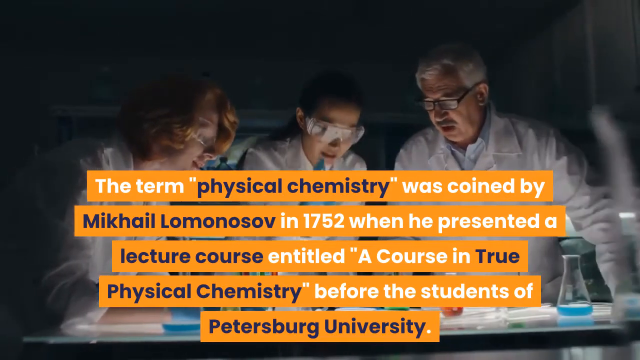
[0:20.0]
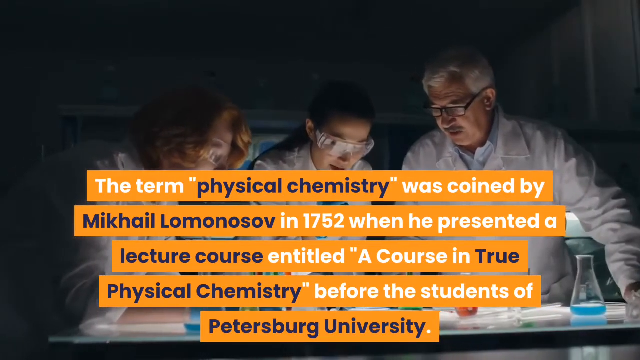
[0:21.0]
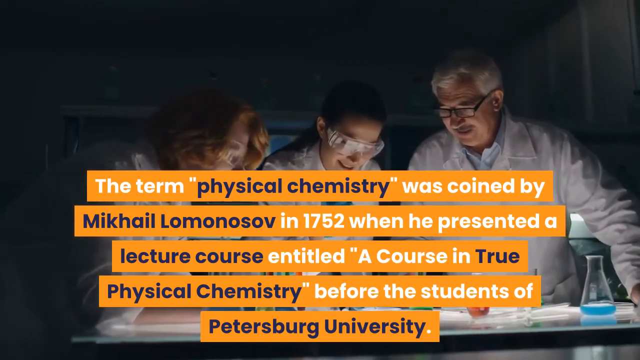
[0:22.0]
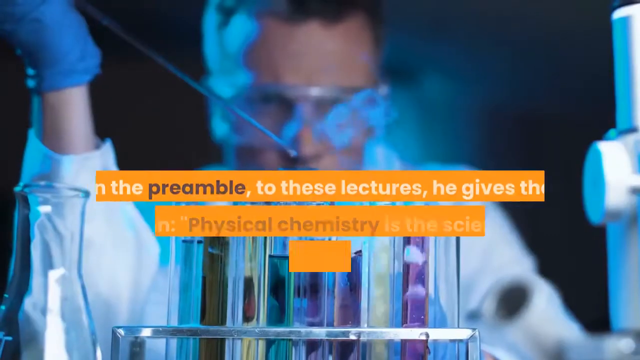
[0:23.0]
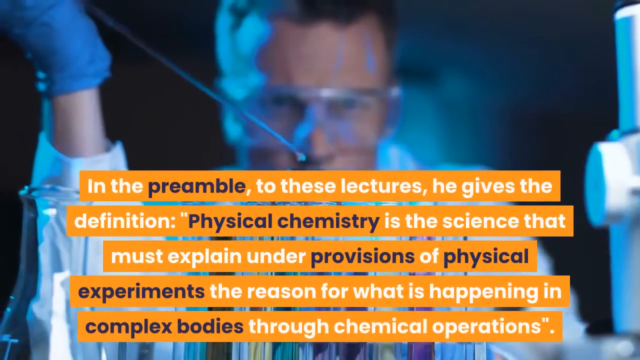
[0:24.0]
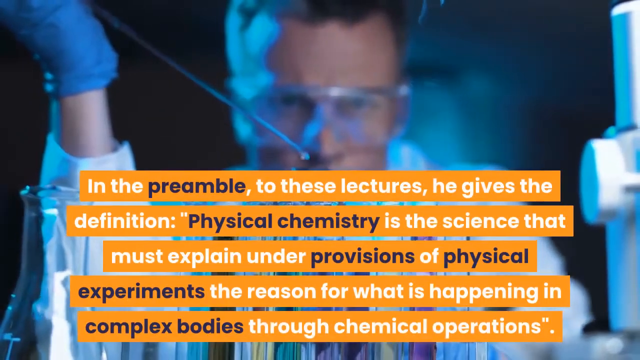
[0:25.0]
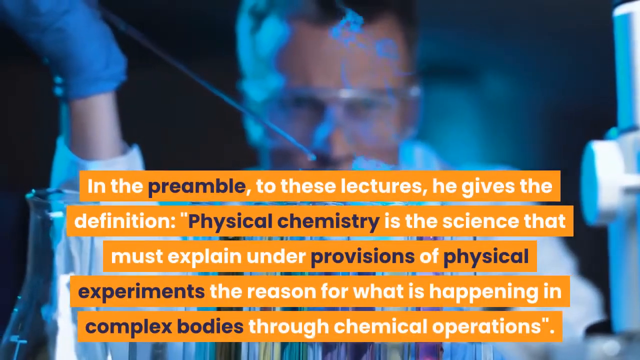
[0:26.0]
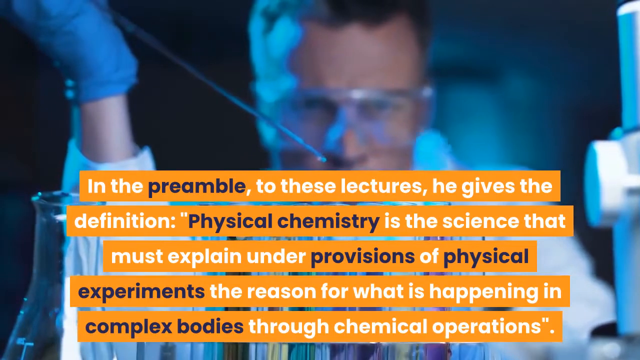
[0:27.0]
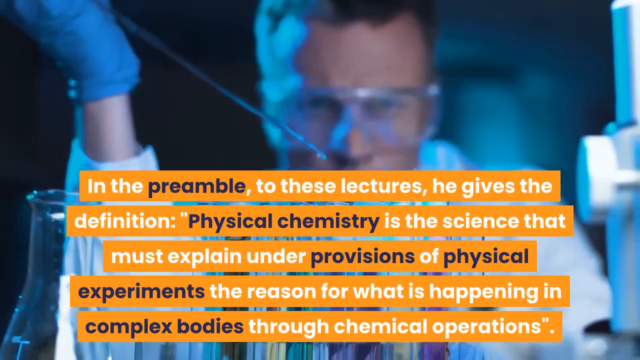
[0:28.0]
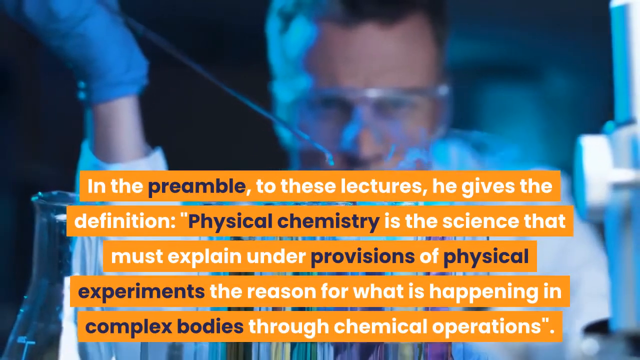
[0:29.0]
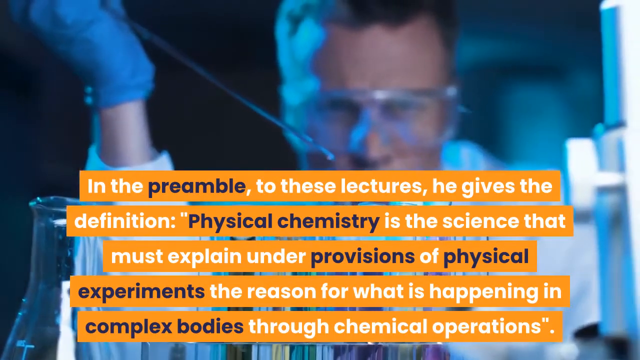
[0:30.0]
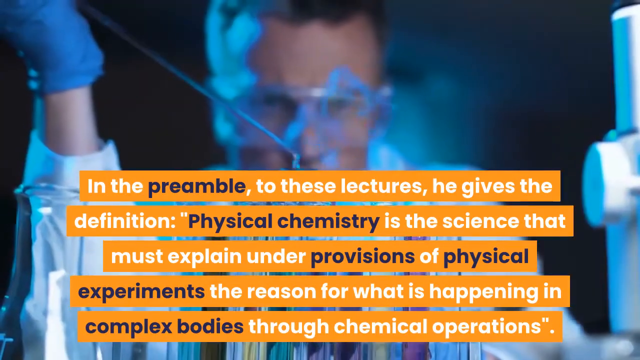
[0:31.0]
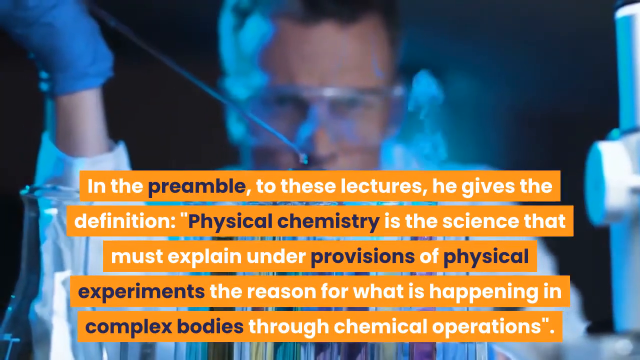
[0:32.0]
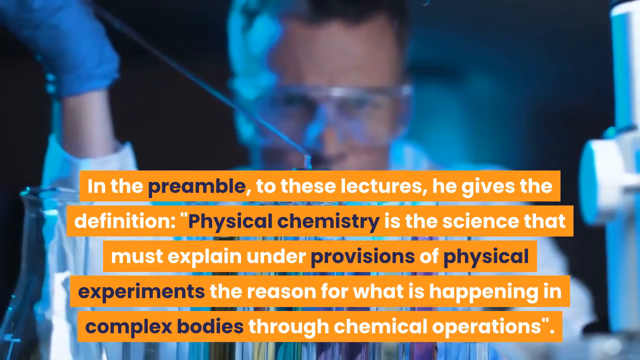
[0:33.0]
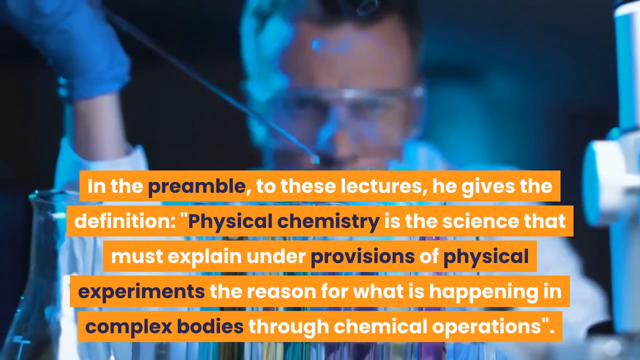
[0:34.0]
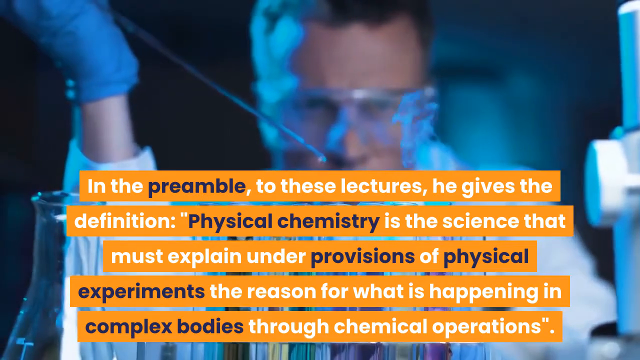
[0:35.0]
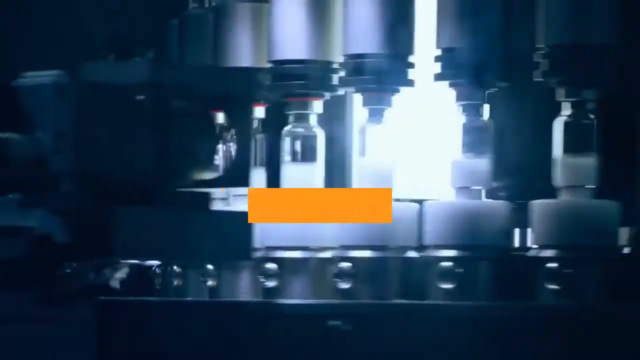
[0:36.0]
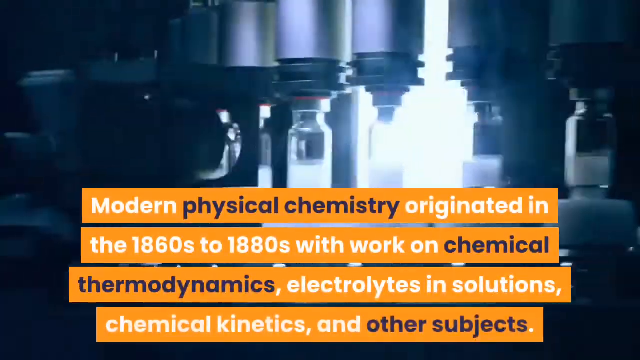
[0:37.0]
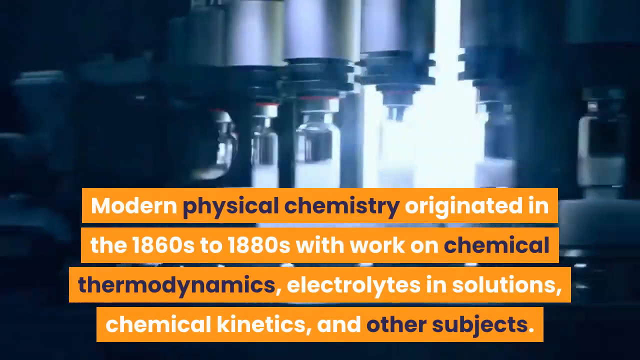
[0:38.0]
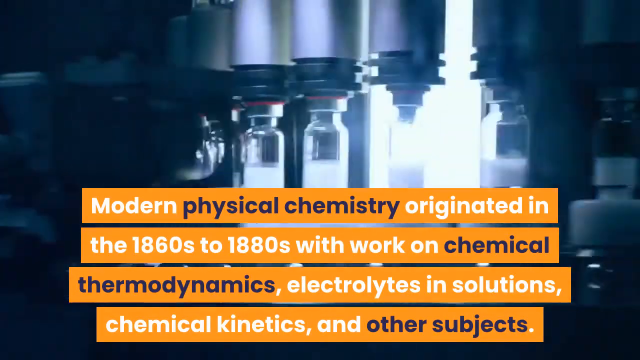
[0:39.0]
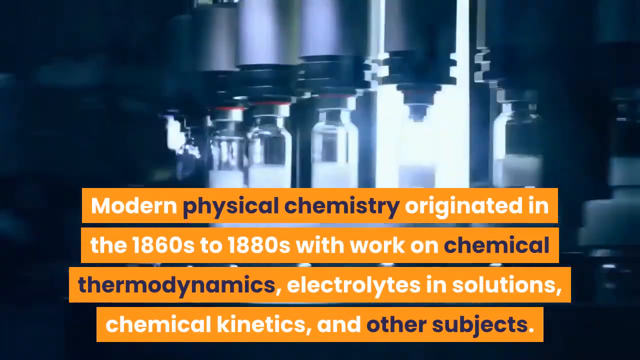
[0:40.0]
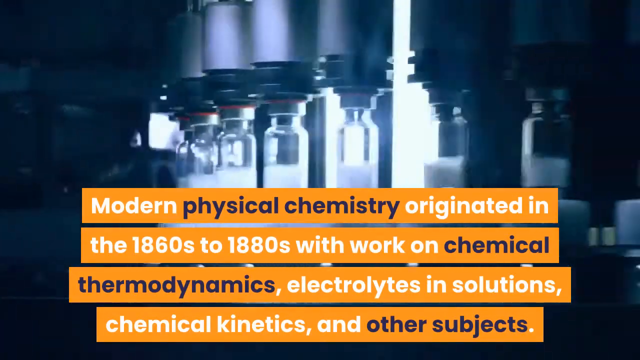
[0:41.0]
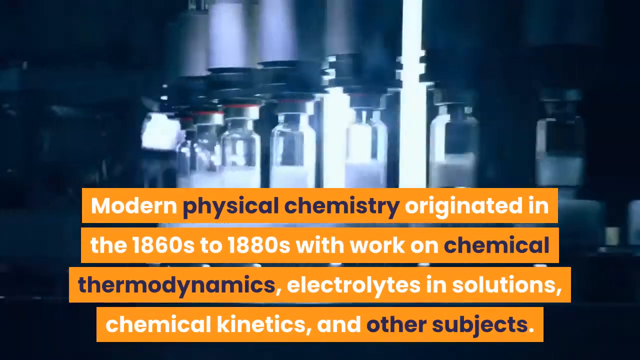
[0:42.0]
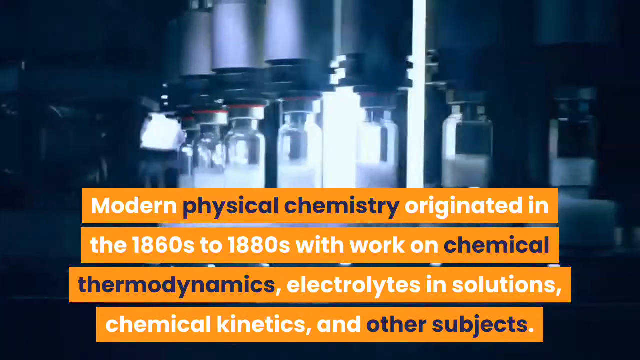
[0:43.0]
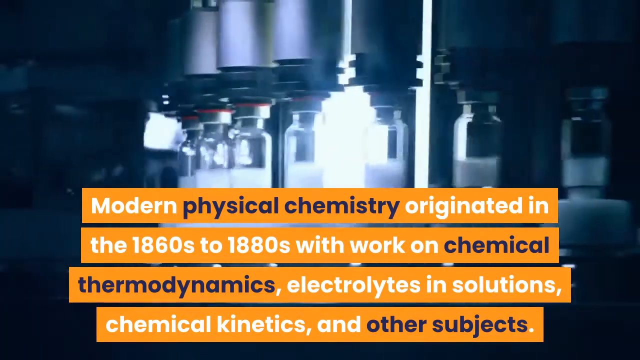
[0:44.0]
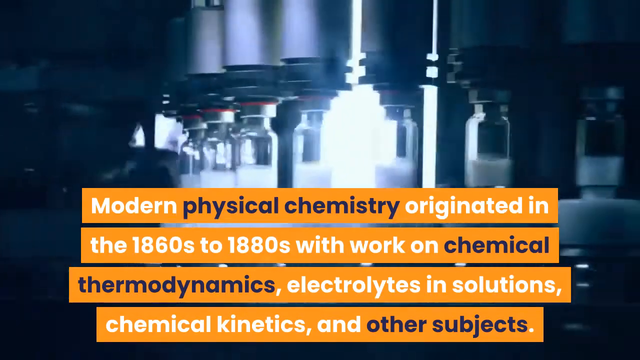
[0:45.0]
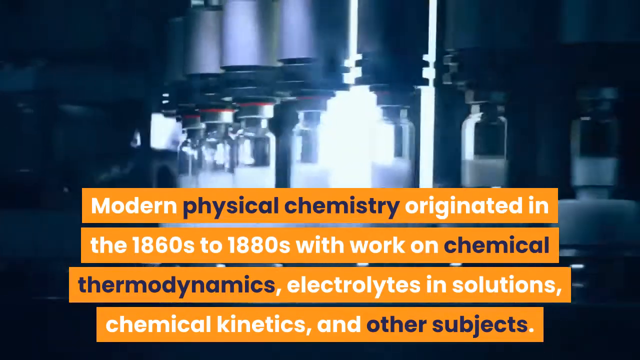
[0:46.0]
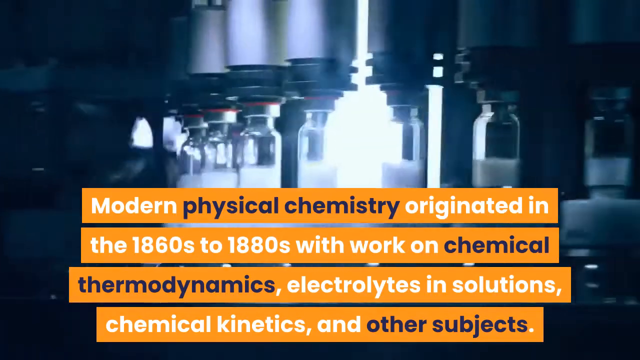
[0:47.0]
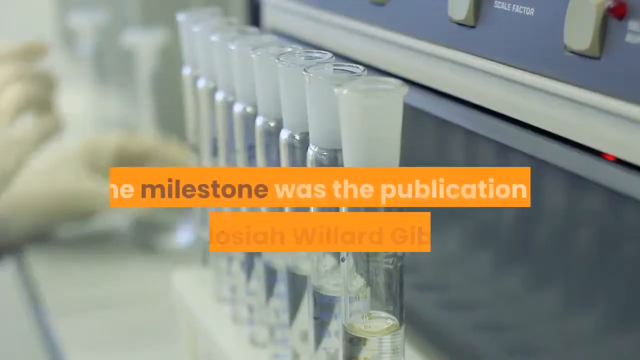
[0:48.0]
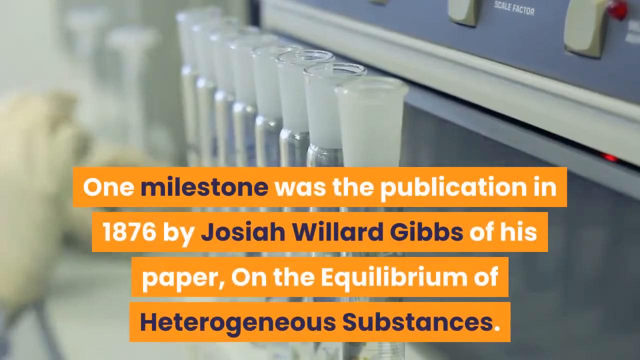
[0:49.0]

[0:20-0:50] A group of three chemists is inside a lab. A shot from above shows a chemist using a dropper to place a solution into a beaker, and small plumes of smoke puff up into the air. The caption adds that in these lectures physical chemistry was defined as the science under provisions of physical experiments, and describes what happens in complex bodies through chemical operations. Next, a piece of machinery manufactures small bottles of medication. The caption reads "modern physical chemistry originated in the 1860s and 1880s to work on chemical thermodynamics, electrolytes and solutions, chemical kinetics, and other subjects." A bright light shines on each bottle, seemingly to check its quality.